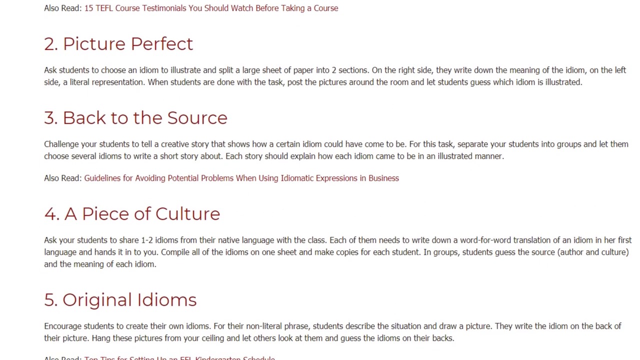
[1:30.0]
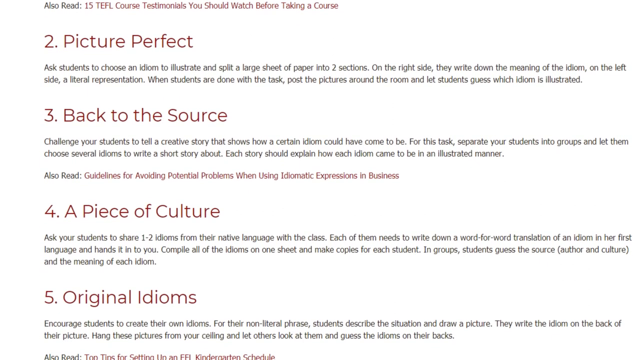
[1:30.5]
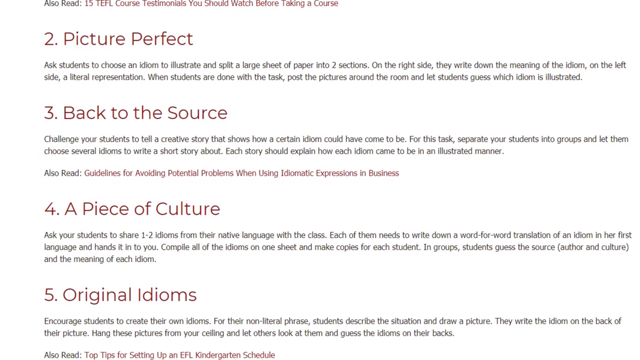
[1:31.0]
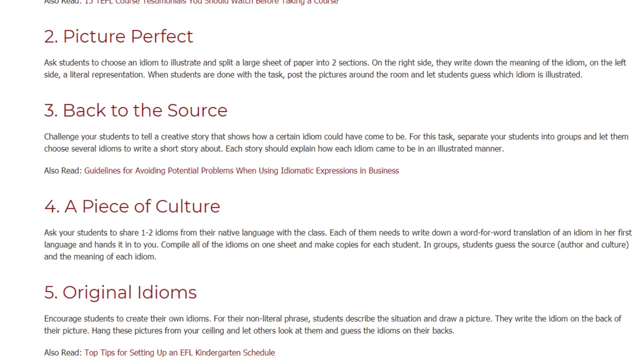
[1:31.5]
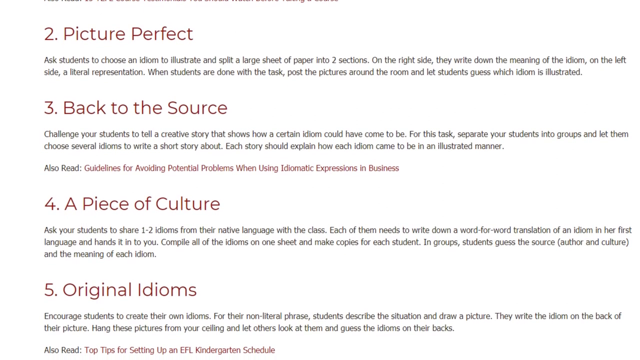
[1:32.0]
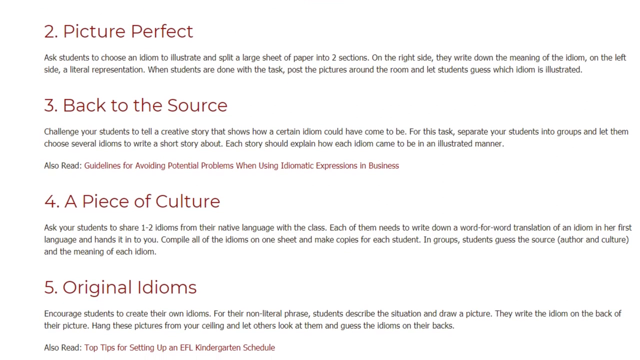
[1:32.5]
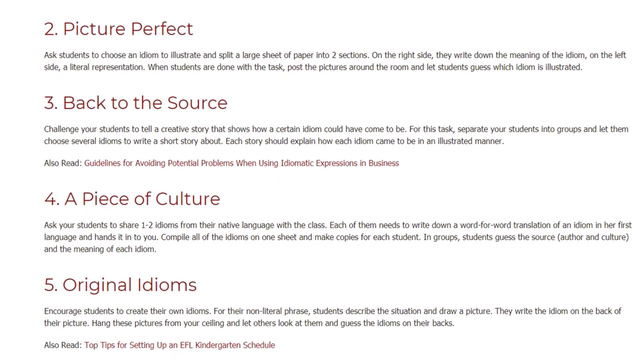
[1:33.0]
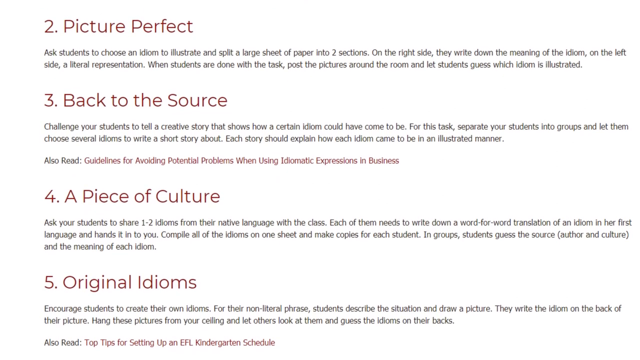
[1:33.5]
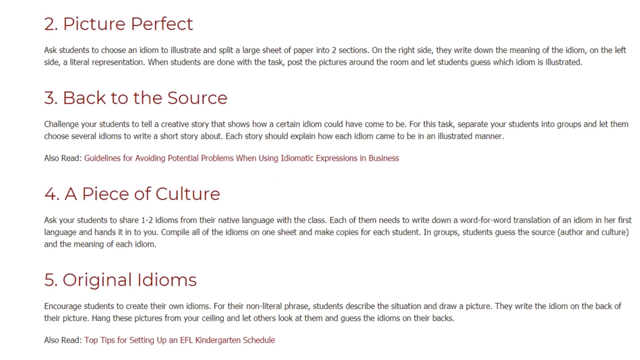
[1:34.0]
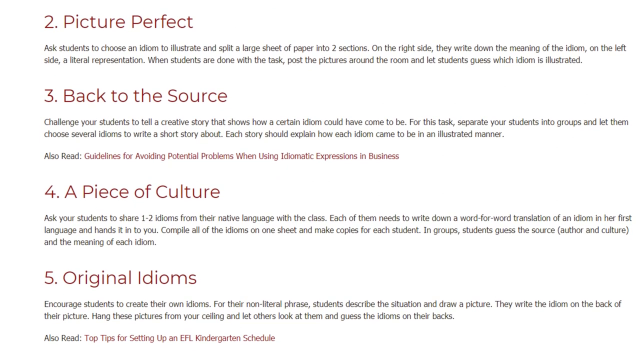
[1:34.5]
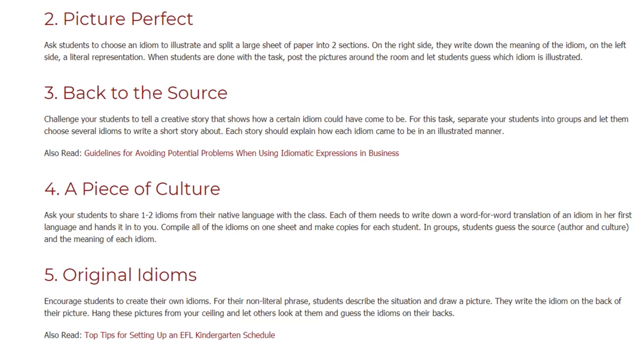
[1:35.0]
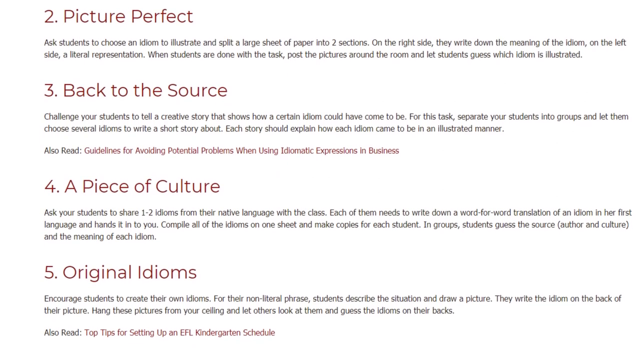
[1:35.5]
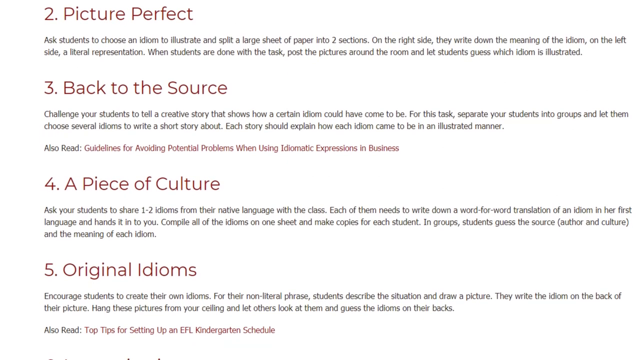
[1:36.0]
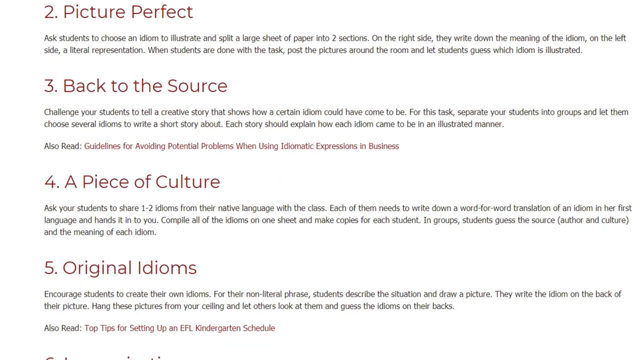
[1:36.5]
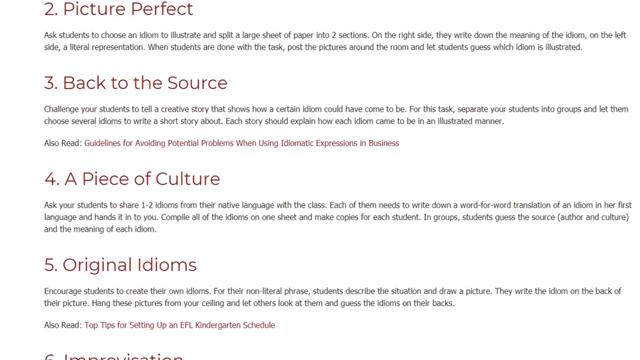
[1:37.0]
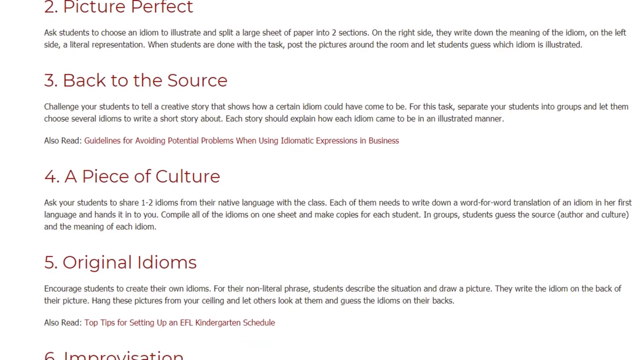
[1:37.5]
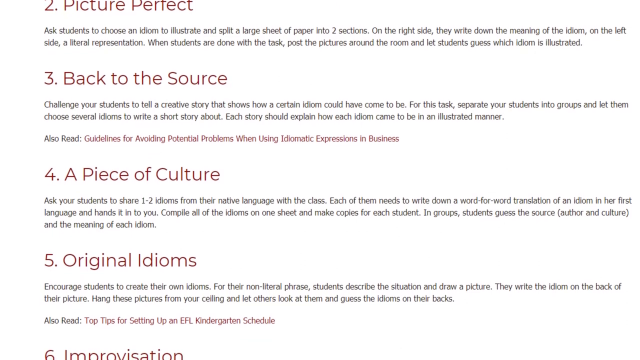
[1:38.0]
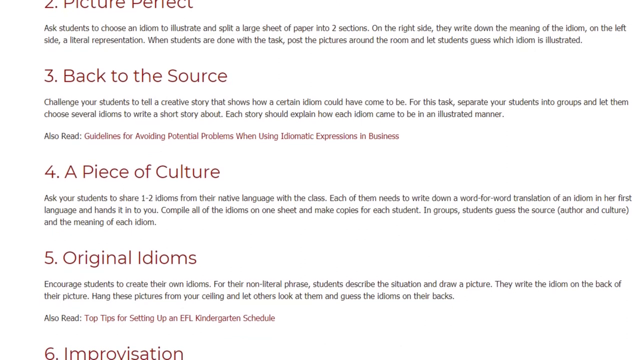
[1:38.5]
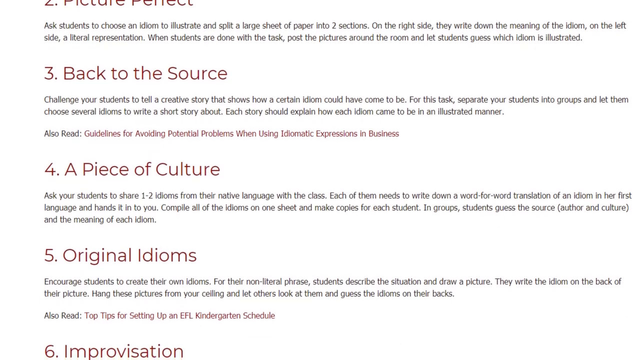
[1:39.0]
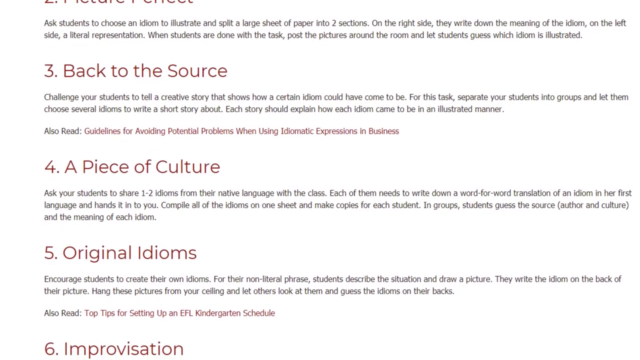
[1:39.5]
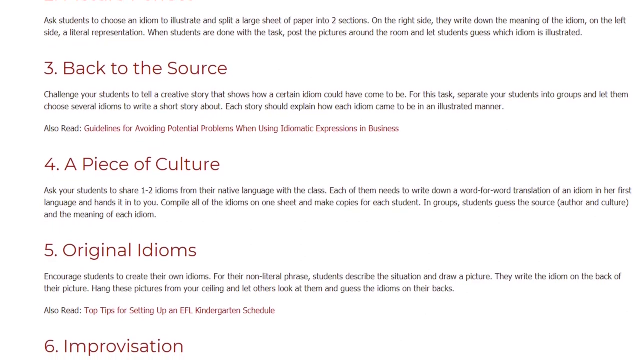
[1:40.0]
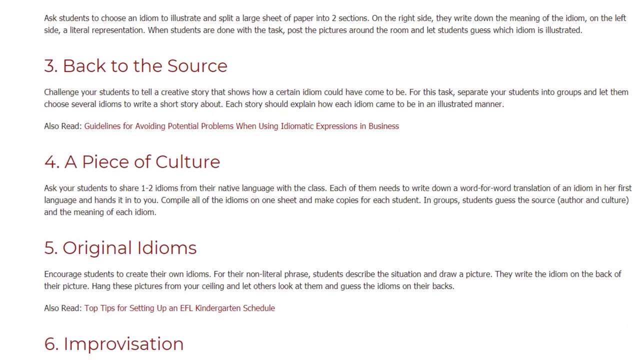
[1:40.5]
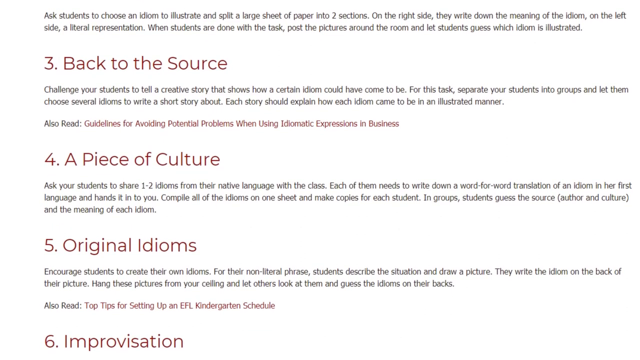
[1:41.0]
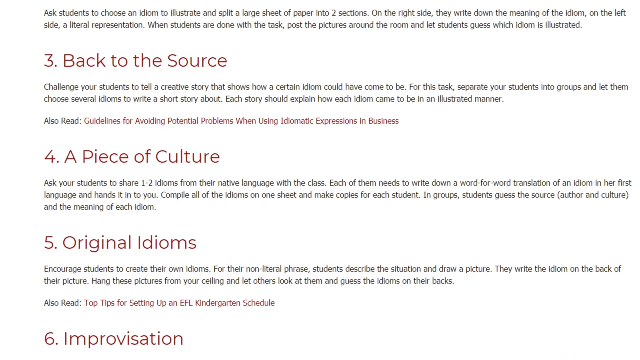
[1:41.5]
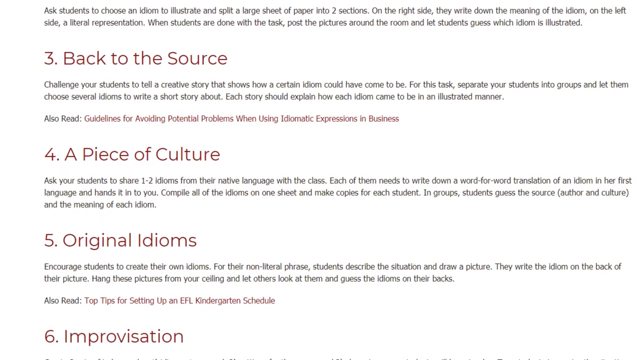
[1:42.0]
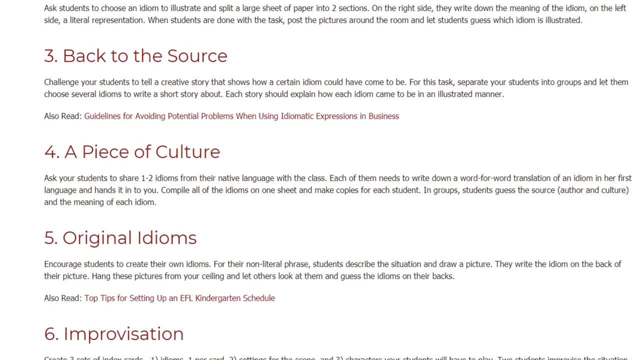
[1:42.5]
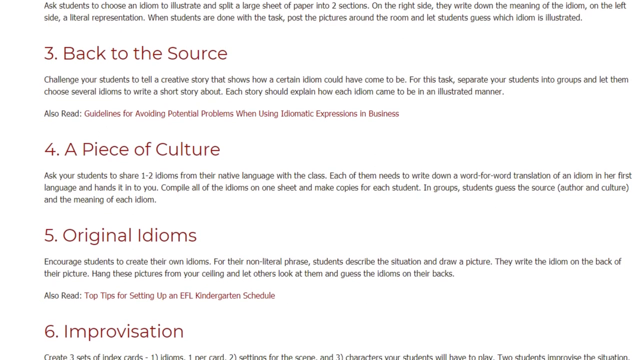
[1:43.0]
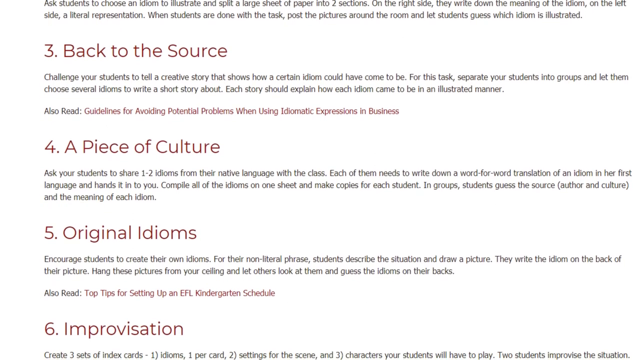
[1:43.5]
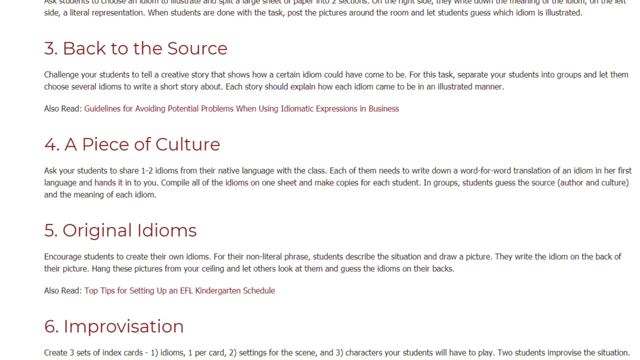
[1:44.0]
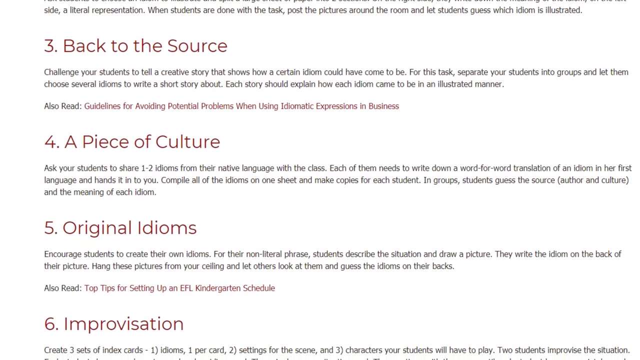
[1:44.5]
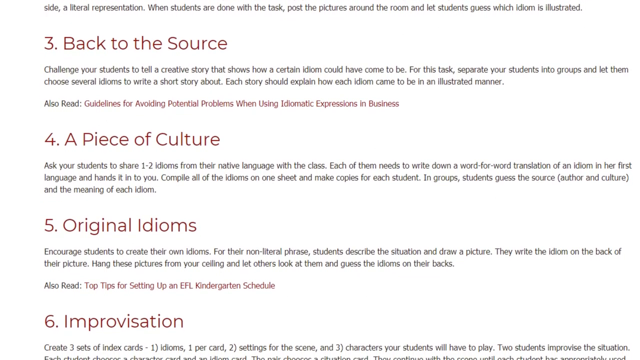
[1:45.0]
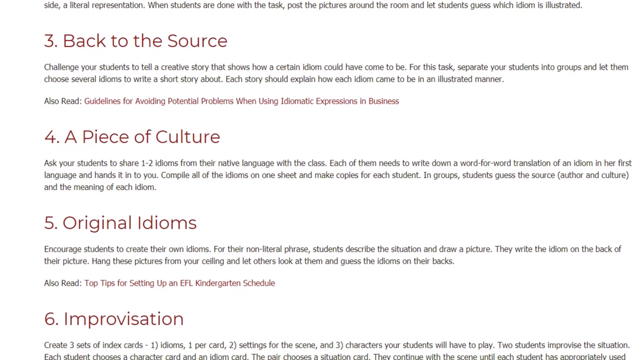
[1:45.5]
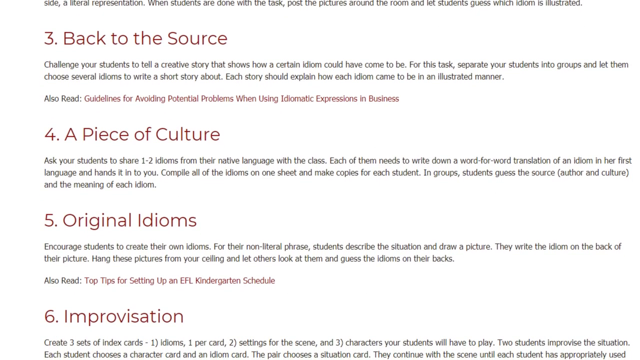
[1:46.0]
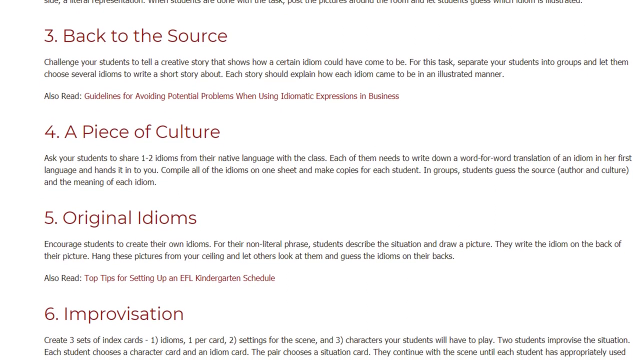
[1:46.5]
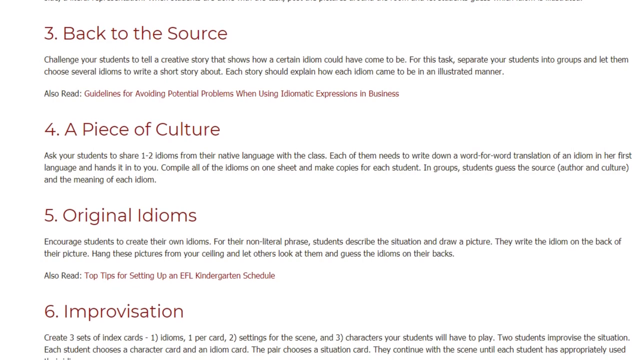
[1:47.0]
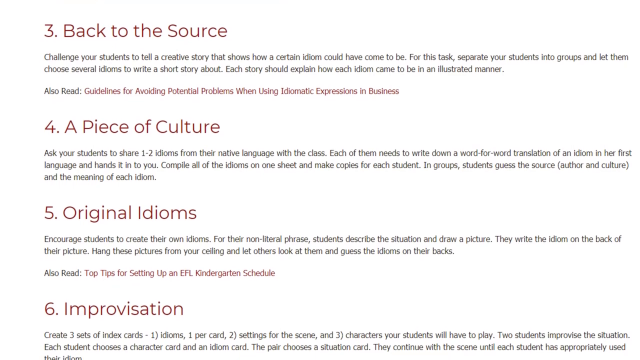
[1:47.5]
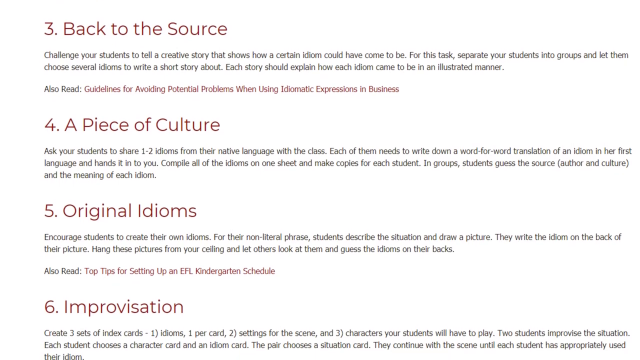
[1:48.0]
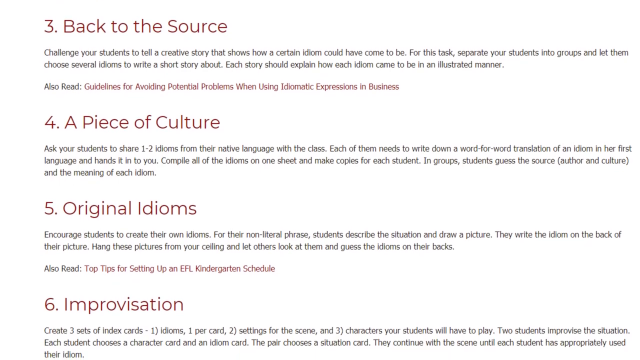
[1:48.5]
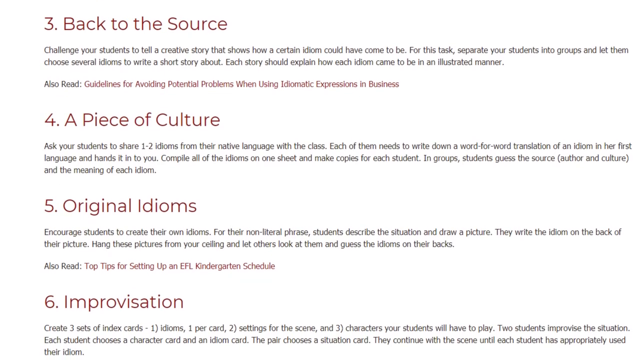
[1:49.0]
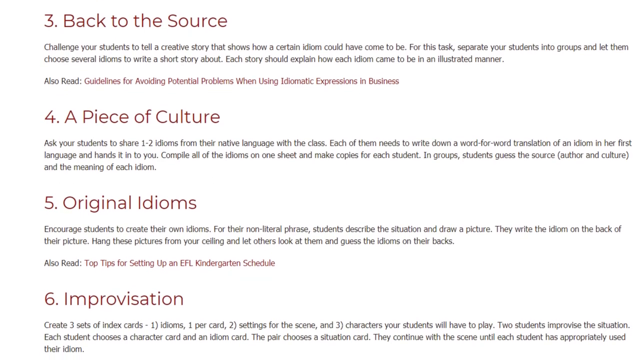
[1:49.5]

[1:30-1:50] The video explains idioms for a class learning English, now on strategy number two, "picture perfect," with the text: "Ask students to choose an idiom to illustrate and split a large sheet of paper into two sections. On the right side they write down the meaning of the idiom, on the left side a literal interpretation. When students are done with the task post the pictures around the room and let students guess which idiom is illustrated." Strategy number three, "back to the source," has the description below it: "Challenge your students to tell a creative story that shows how a certain idiom could have come to be. For this task separate your students into groups and let them choose several idioms to write a short story about. Each story should explain how each idiom came to be in an illustrated manner." The fourth strategy, "a piece of culture," has the text: "Ask your students to share one to two idioms from their native language with the class. Each of them needs to write down a word-for-word translation of an idiom in her first language and hands it in to you. Compile all the idioms on one sheet and make copies for each student. In groups students guess the source, author and culture and the meaning of each idiom." Strategy number five, "original idioms," follows: "Encourage students to create their own idioms. For their non-literal phrase students describe the situation and draw a picture. They write down the idiom on the back of their picture. Hang these pictures from your ceiling and let others look at them and guess the idioms on their backs." Number six, "improvisation," is next.